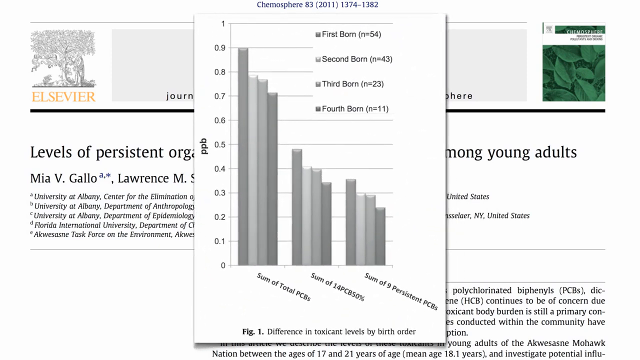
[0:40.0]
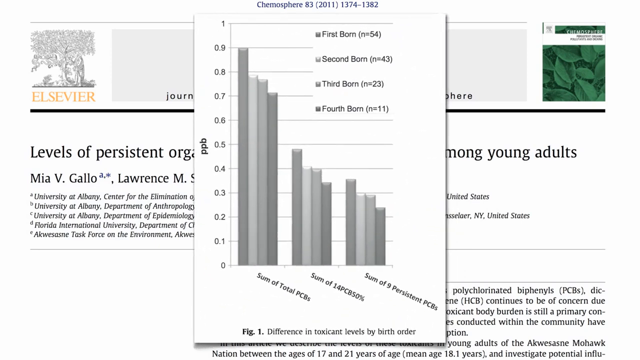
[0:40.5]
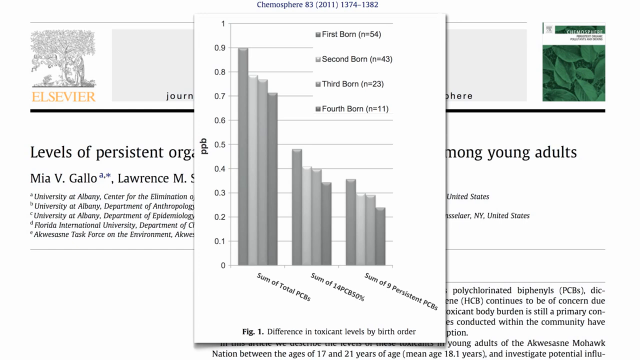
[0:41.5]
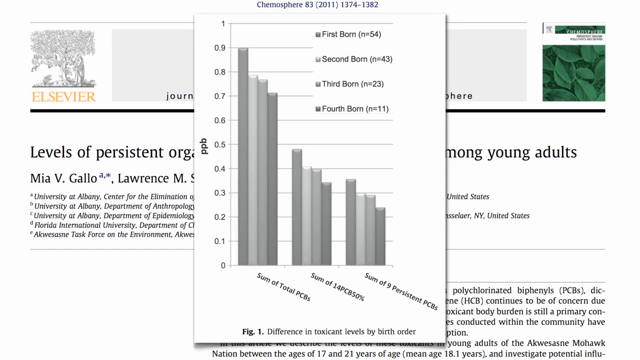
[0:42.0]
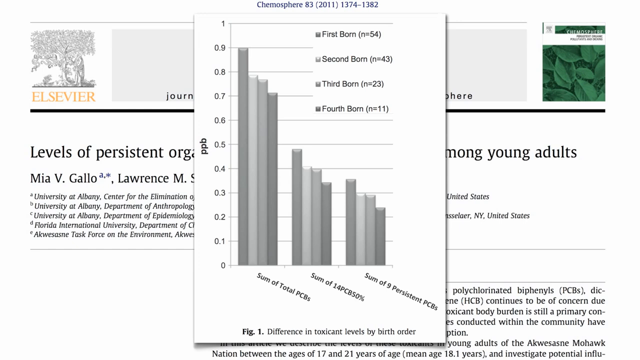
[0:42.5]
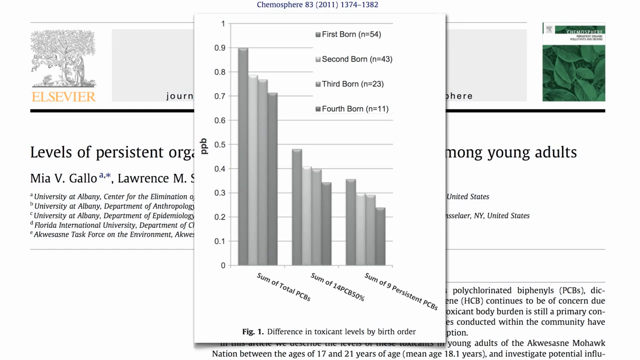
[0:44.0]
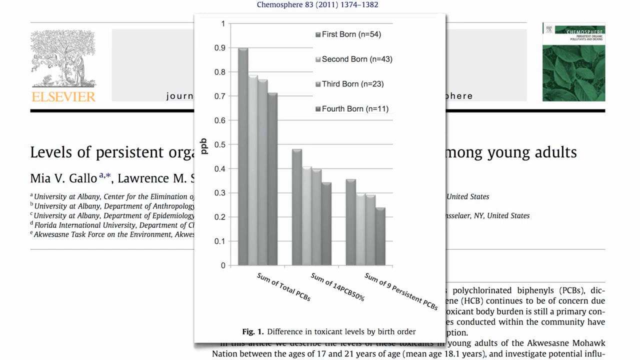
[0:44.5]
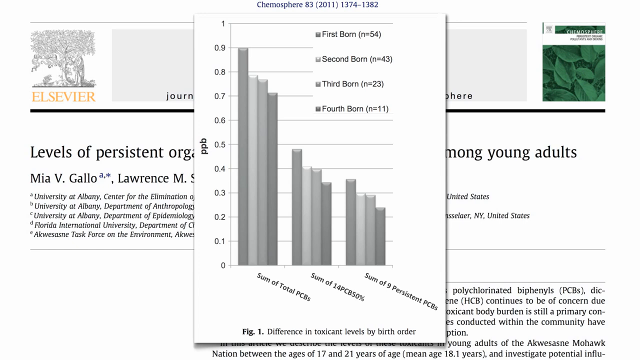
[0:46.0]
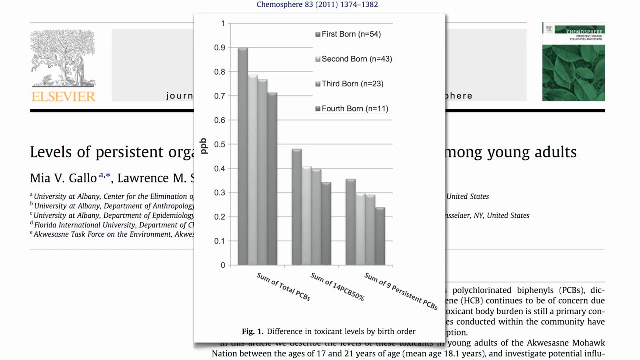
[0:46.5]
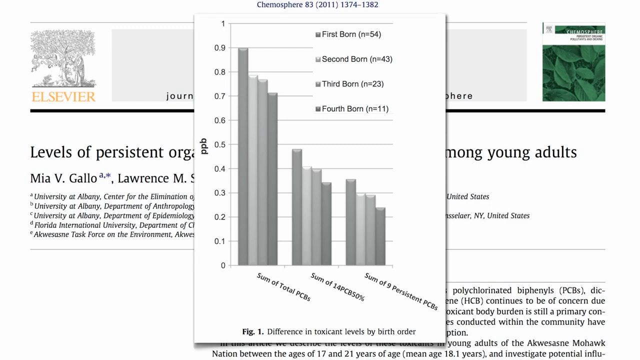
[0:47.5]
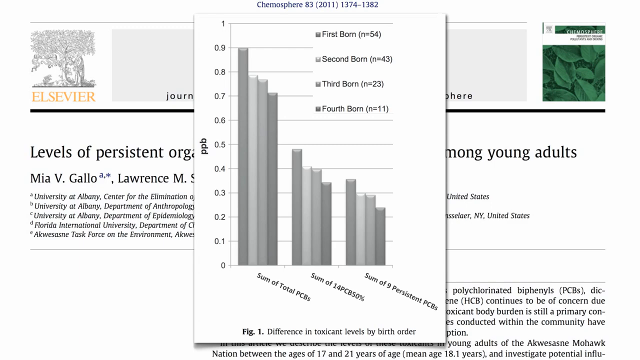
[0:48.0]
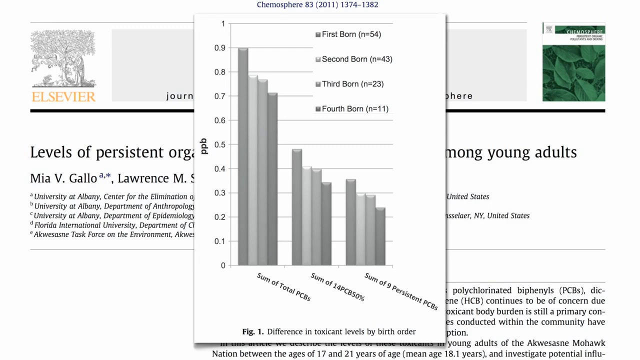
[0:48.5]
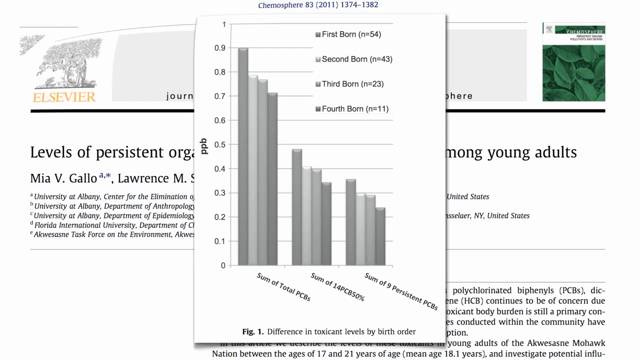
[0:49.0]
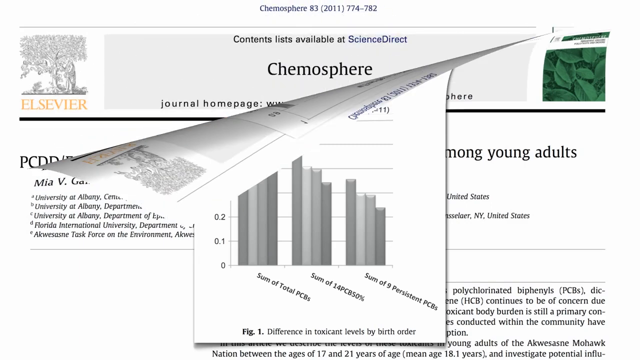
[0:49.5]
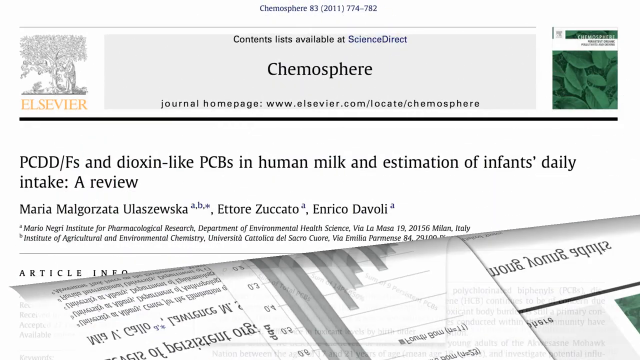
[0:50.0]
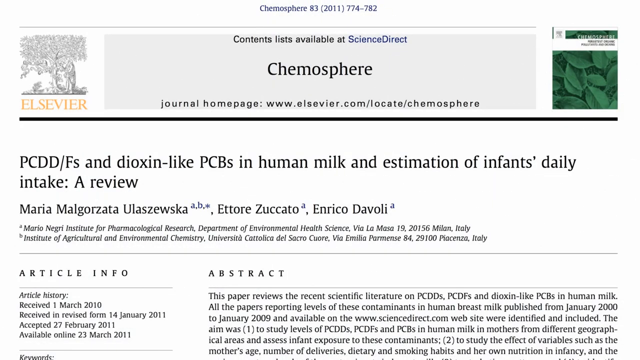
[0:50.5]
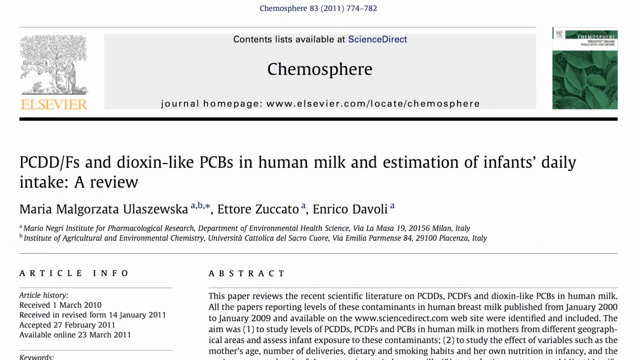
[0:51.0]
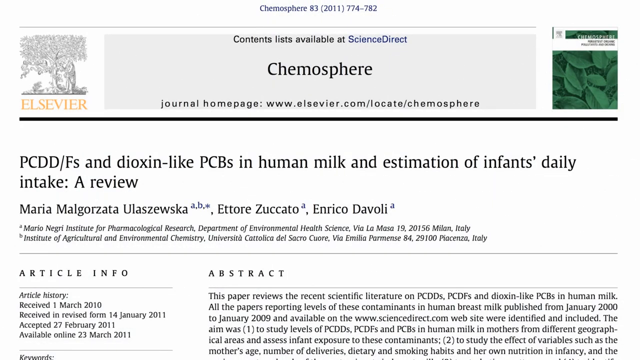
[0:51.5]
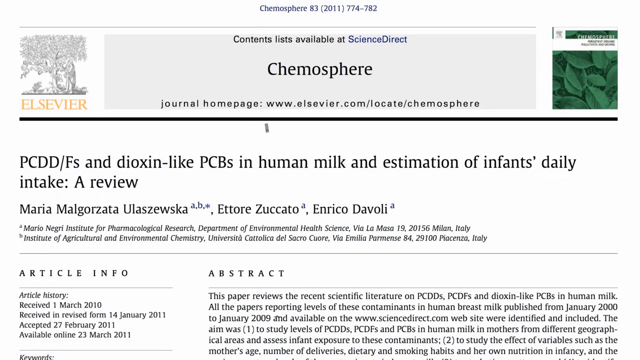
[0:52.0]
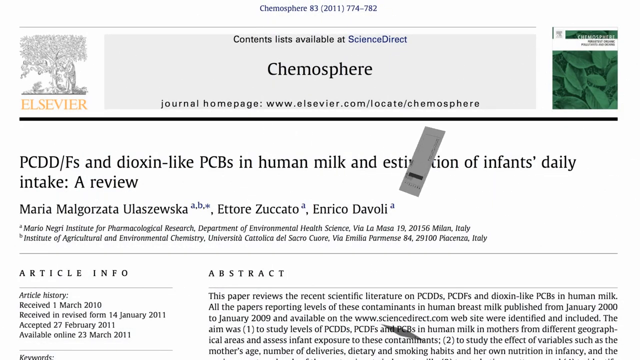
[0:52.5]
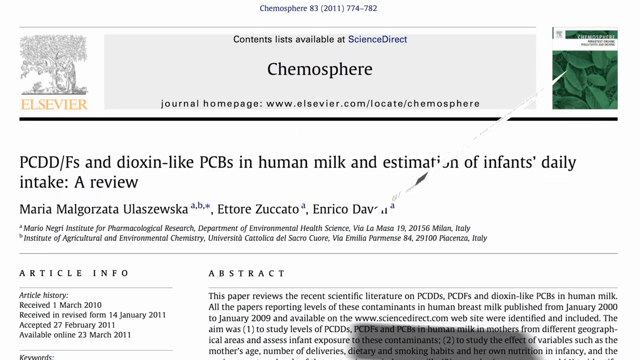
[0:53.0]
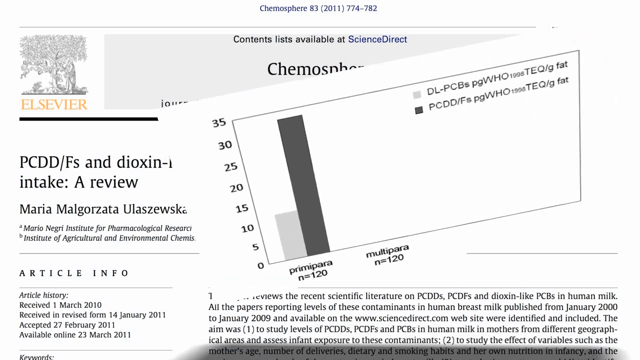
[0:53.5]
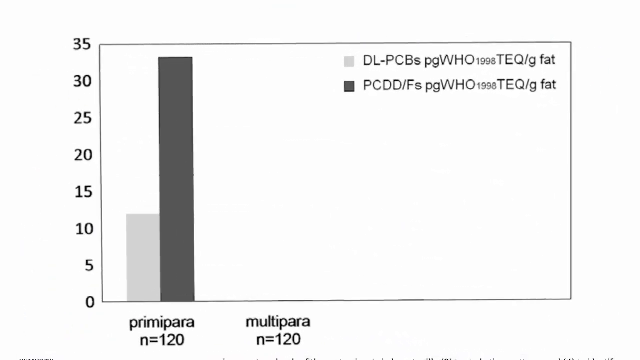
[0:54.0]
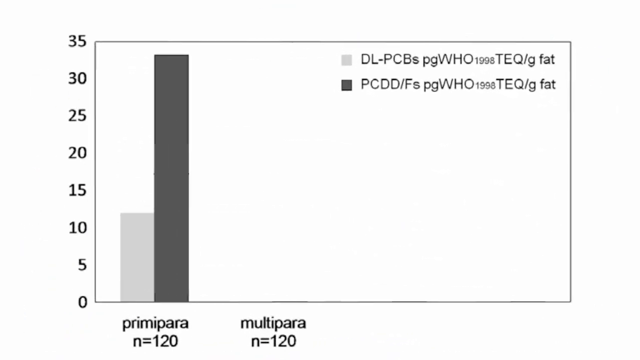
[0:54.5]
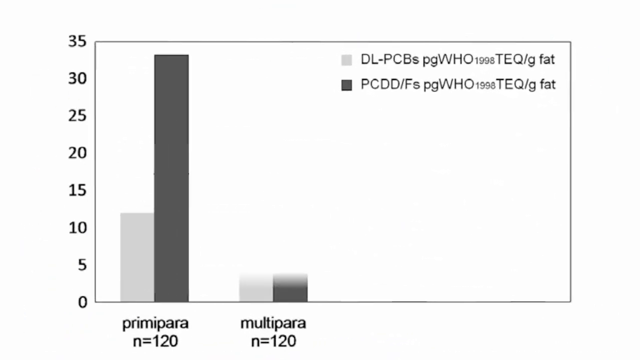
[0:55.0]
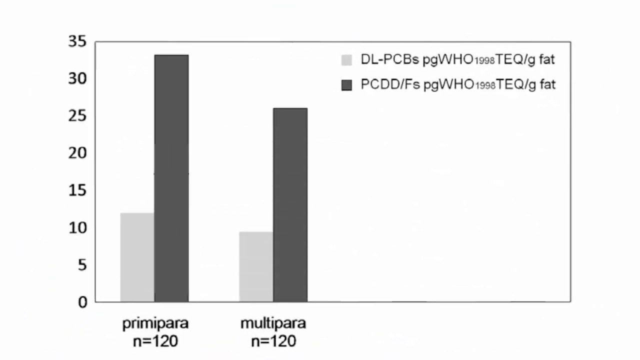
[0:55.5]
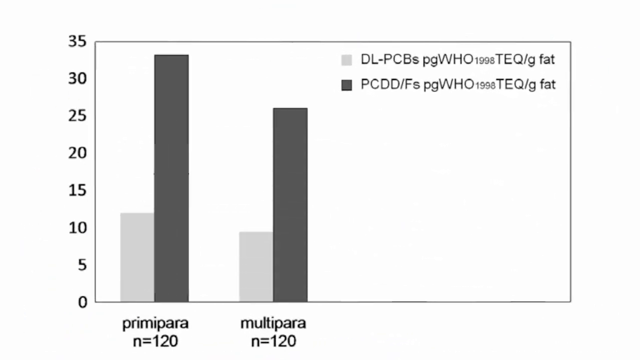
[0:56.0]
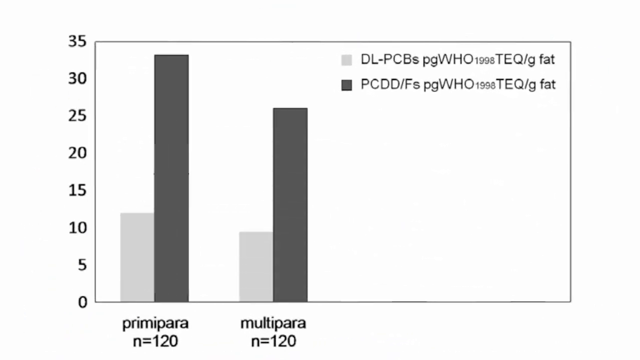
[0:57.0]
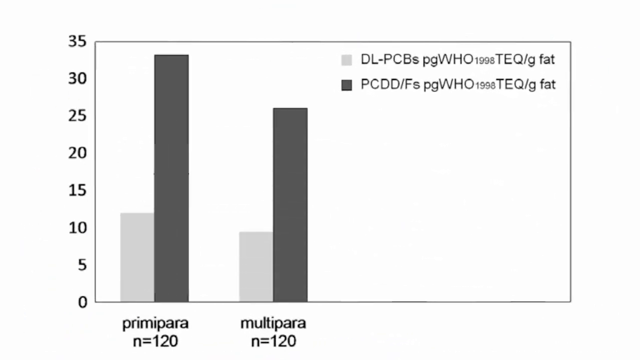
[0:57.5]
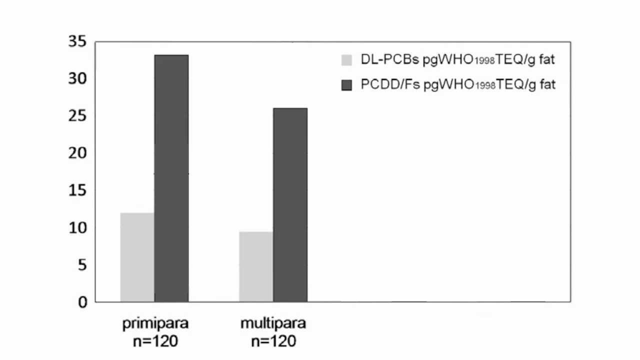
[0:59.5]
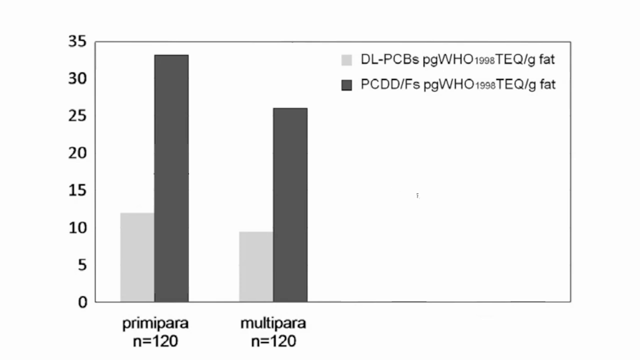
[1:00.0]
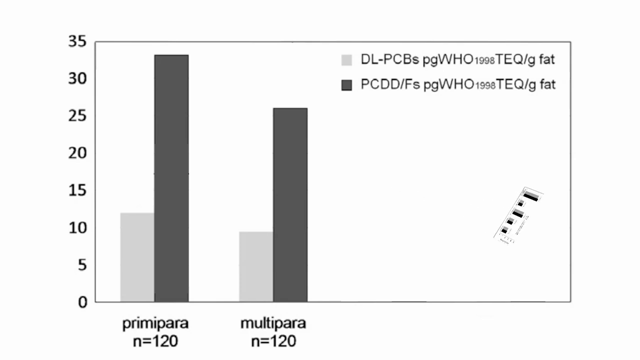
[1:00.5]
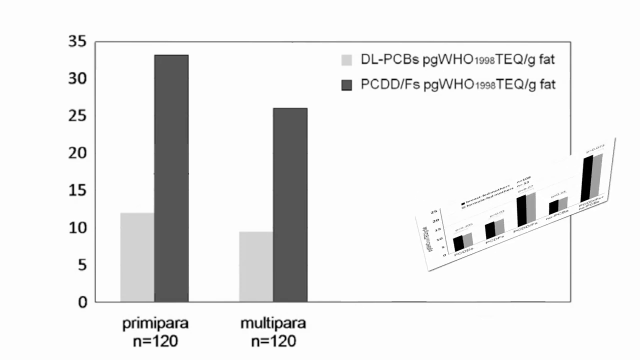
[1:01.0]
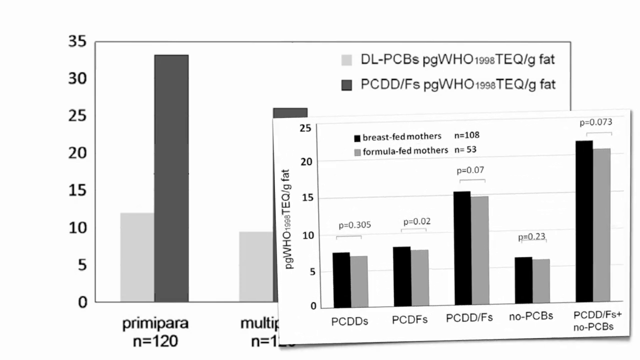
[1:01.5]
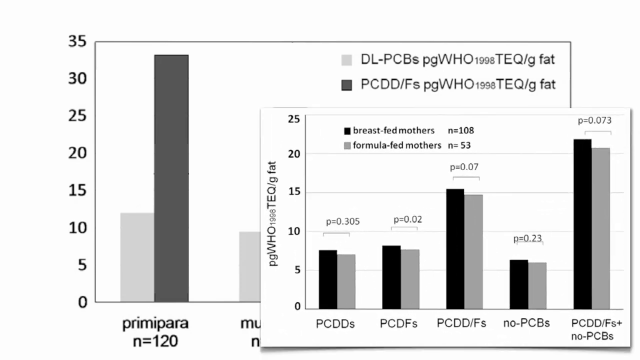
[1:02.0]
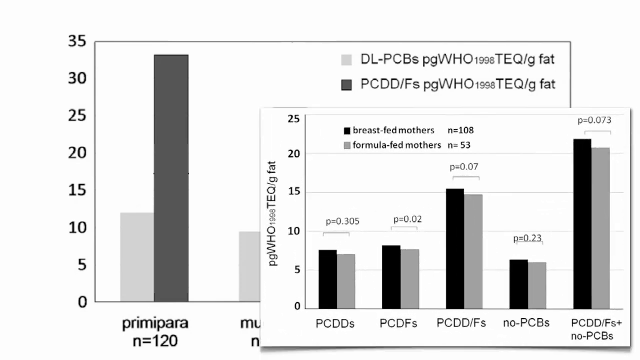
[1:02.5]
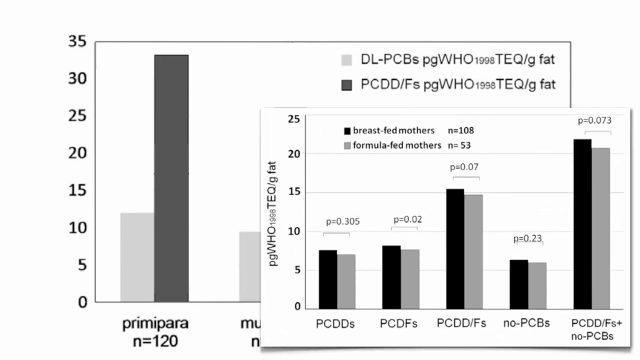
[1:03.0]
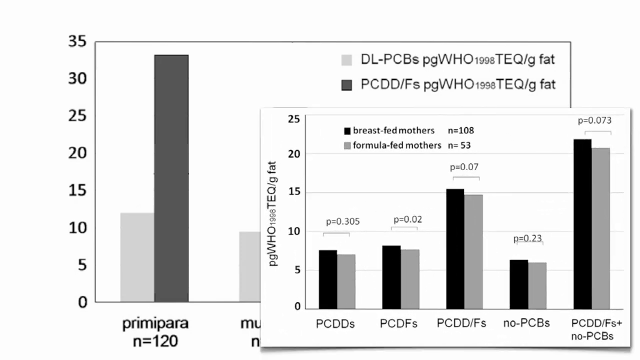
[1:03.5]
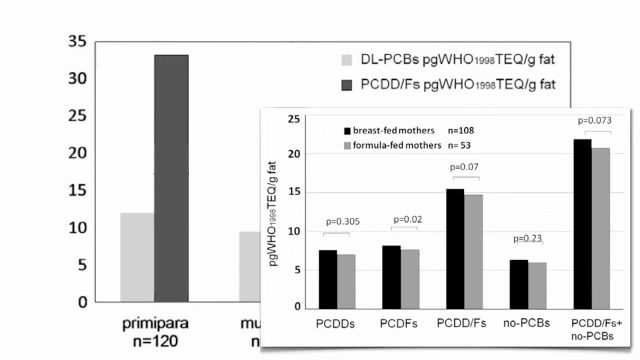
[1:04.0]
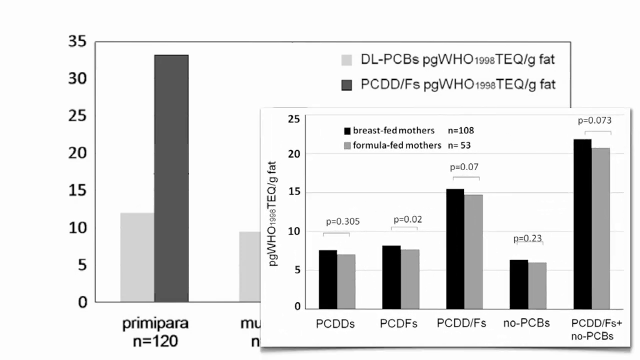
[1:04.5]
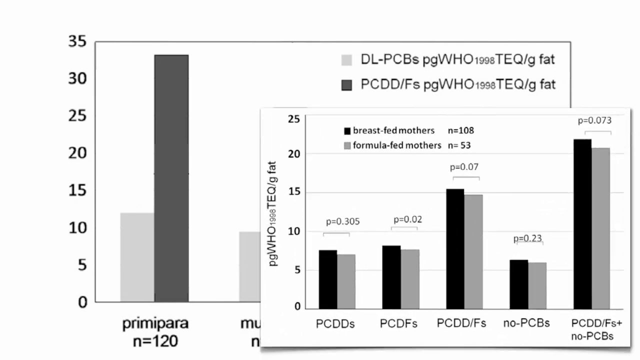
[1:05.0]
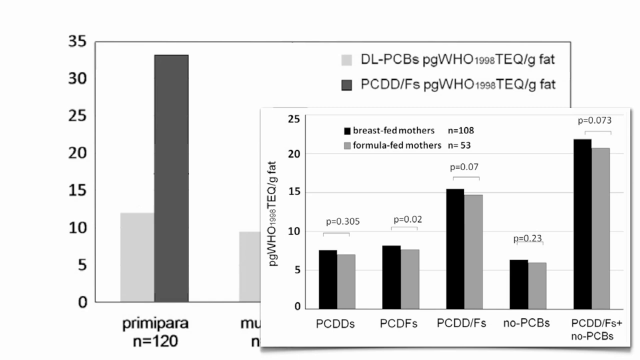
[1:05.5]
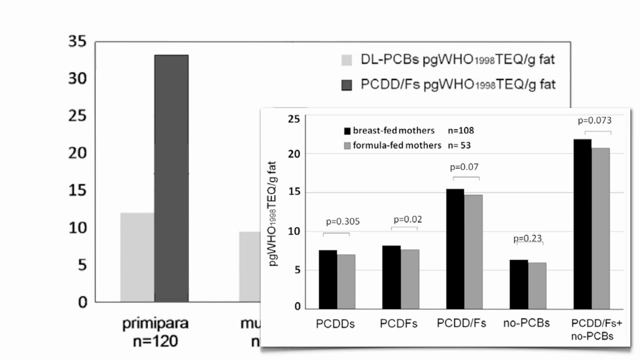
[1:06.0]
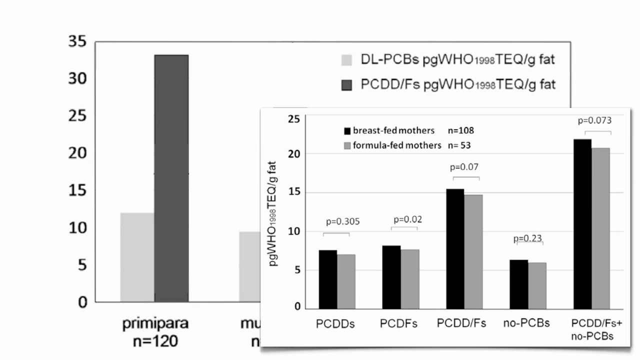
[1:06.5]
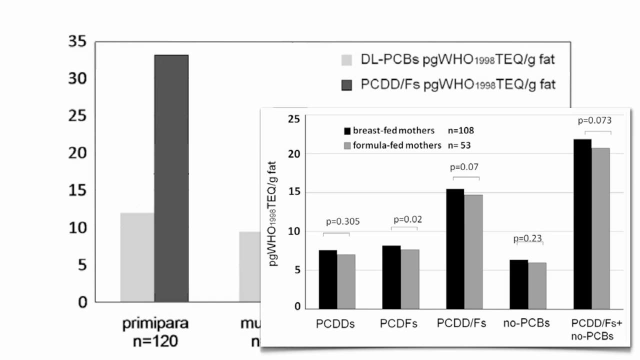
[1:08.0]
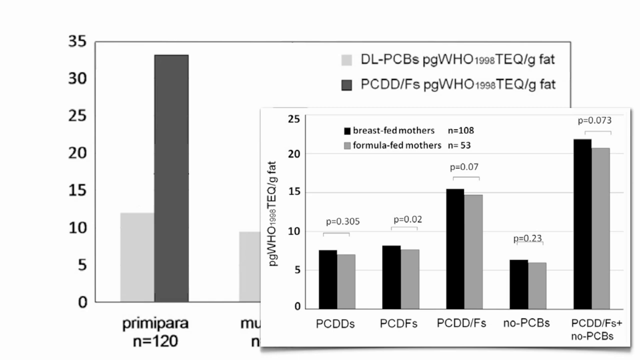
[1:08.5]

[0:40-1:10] A white screen shows the word "chemosphere" in black at the top, with "journal homepage www.elsphere.com" underneath. Below that, a headline in black reads "pcdd\fs and dioxin like pcbs and human milk an estimation of infant's daily intake. A review." A graph then appears. Its vertical axis counts from 0 to 35 by fives: 0, 5, 10, 15, 20, 25, 30, 35. To the right of the numbers is a white square and two vertical gray bars labeled "primapara" beneath them, and to their right two more bars labeled "multipara." Another graph appears, with a black square beside the words "breastfed mothers" at the top and a gray square labeled "formula fed mothers" beneath it. Below are gray and black vertical bars side by side showing the amount.